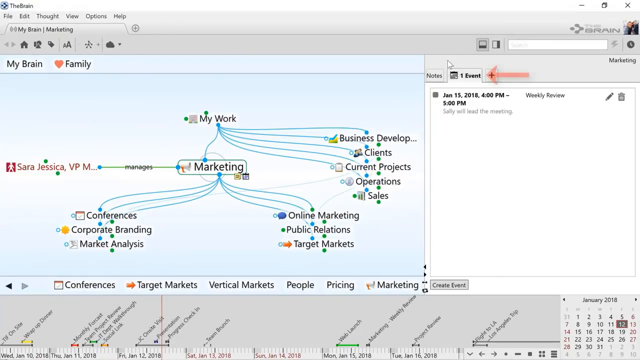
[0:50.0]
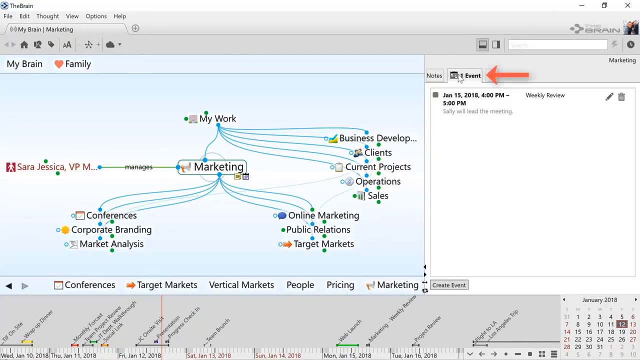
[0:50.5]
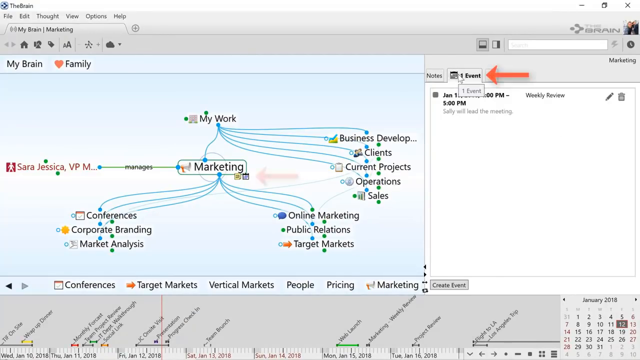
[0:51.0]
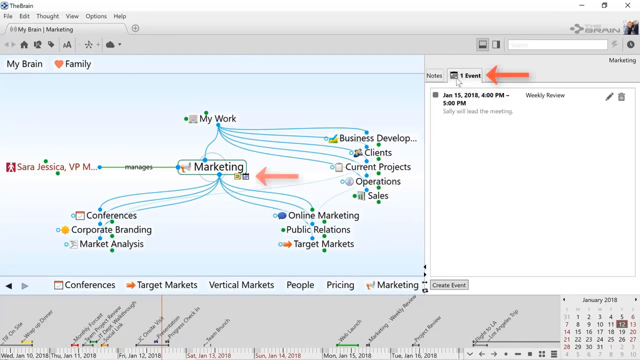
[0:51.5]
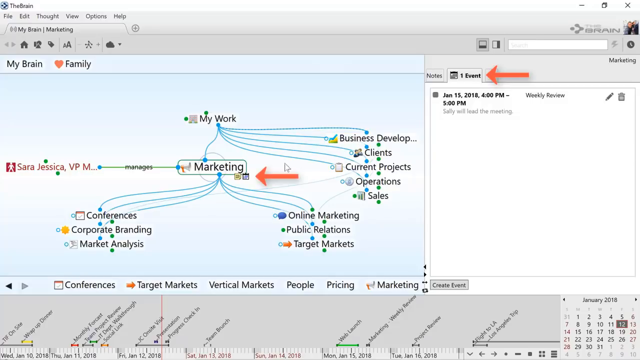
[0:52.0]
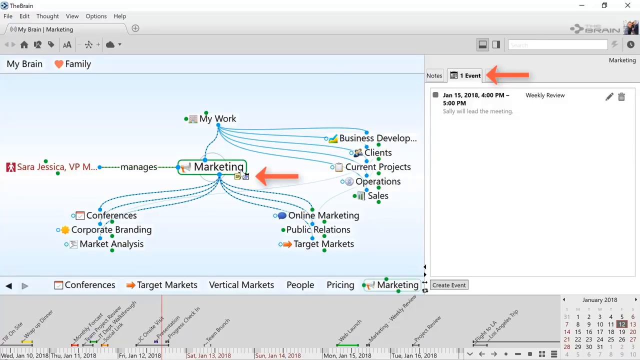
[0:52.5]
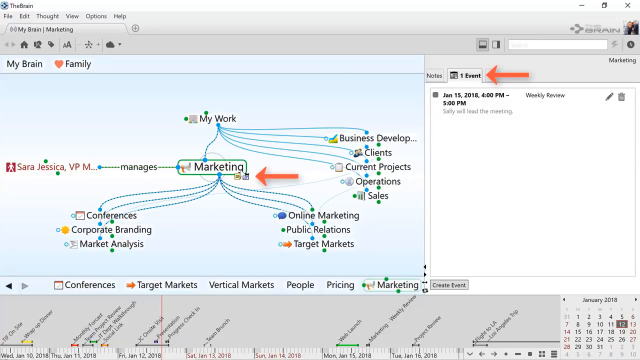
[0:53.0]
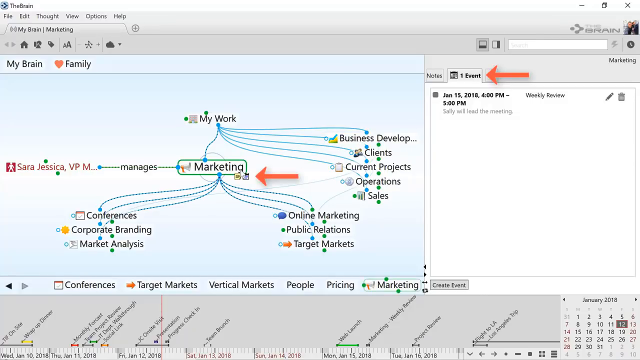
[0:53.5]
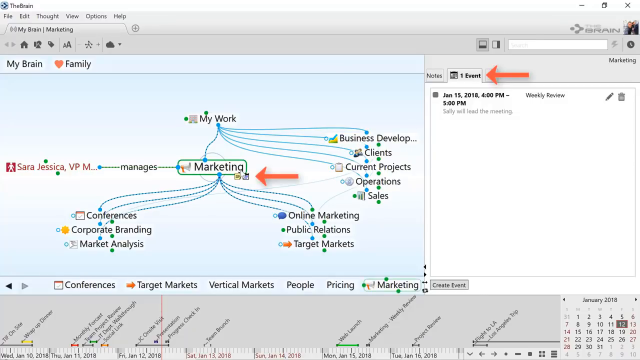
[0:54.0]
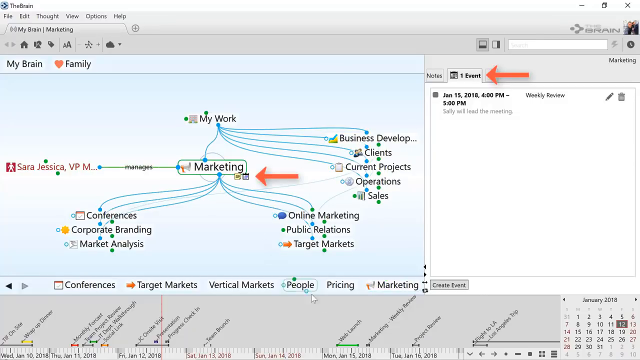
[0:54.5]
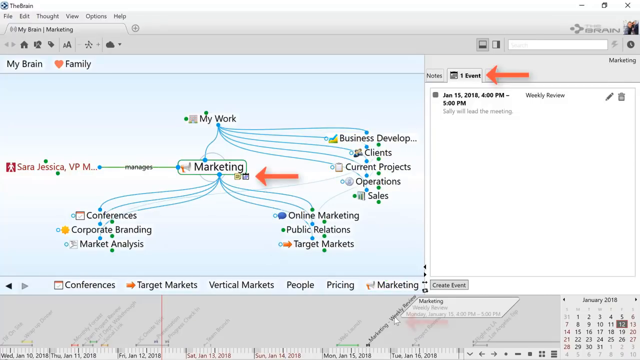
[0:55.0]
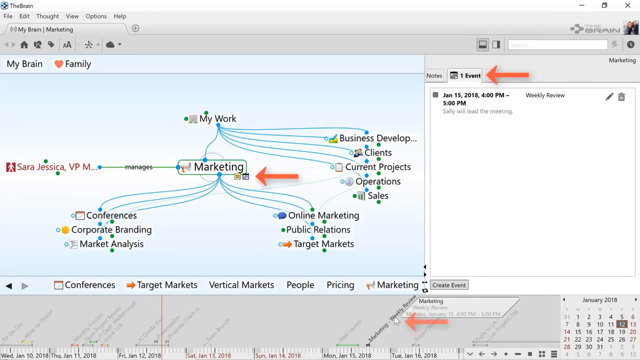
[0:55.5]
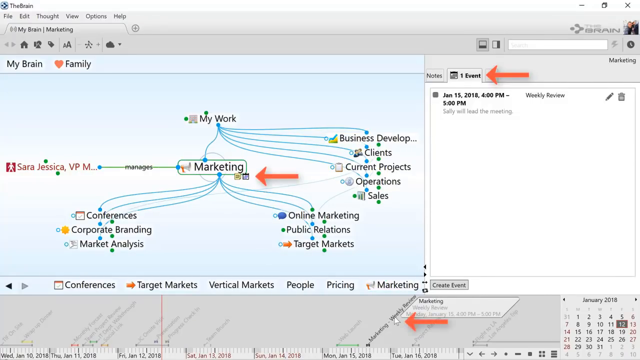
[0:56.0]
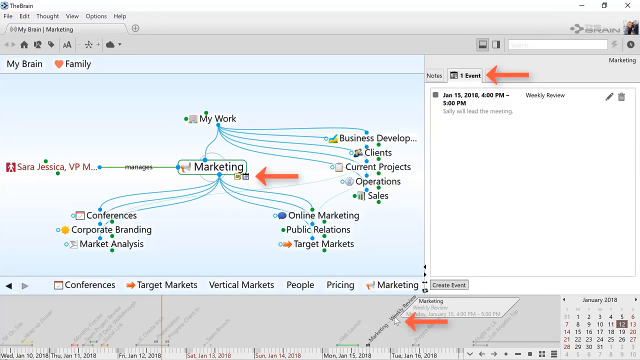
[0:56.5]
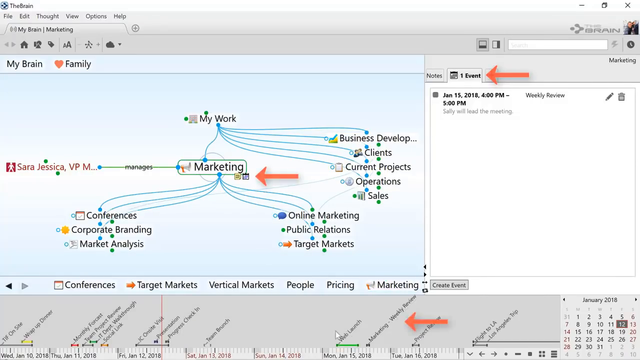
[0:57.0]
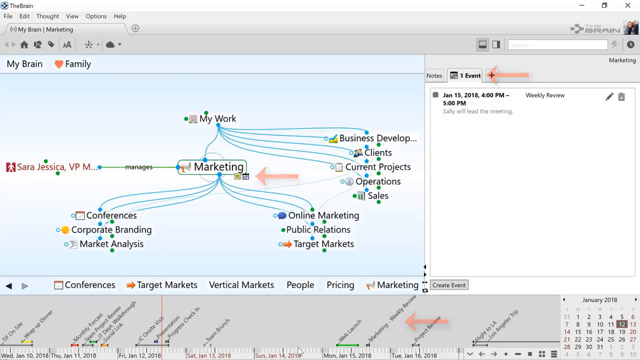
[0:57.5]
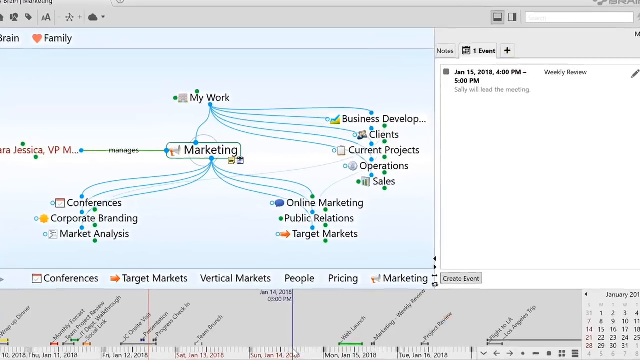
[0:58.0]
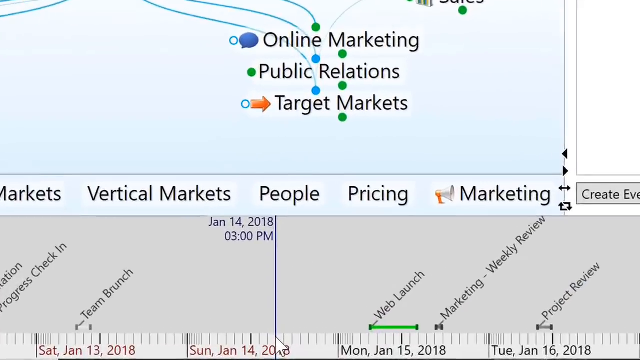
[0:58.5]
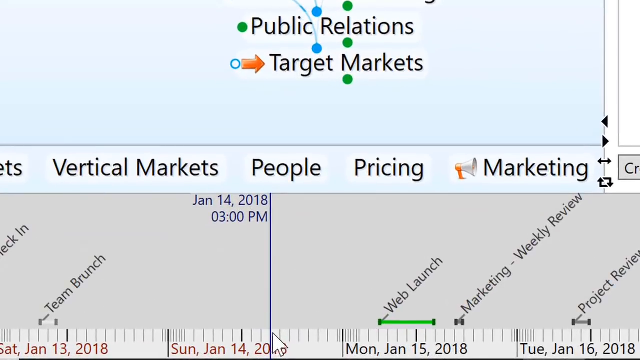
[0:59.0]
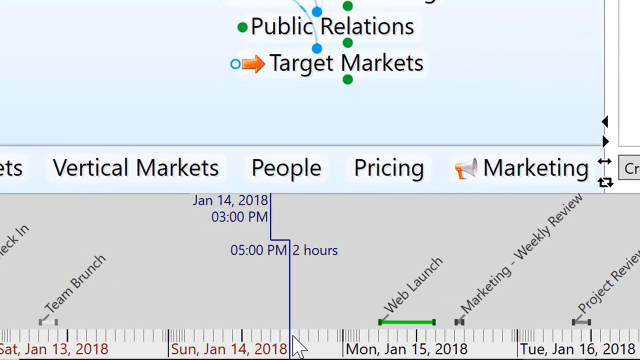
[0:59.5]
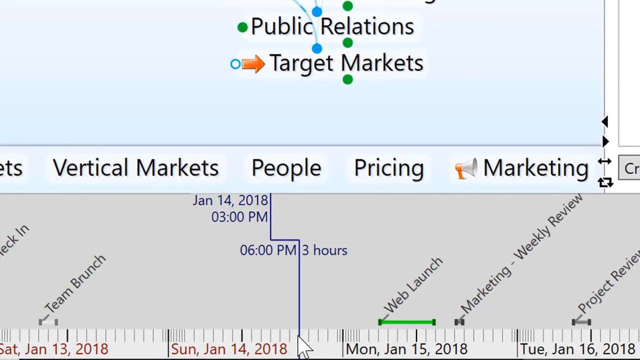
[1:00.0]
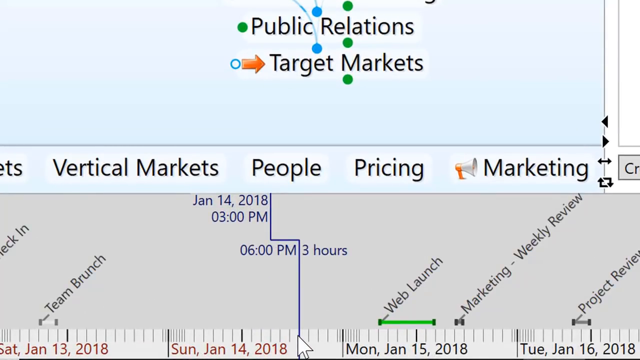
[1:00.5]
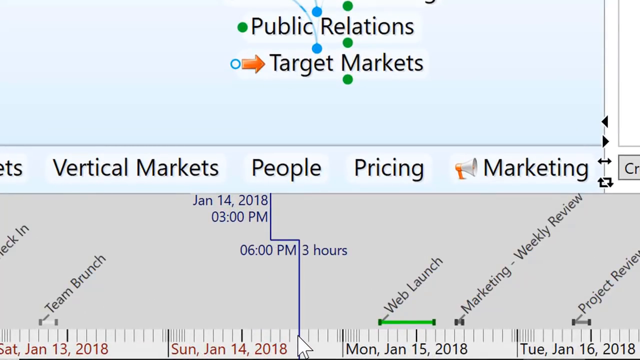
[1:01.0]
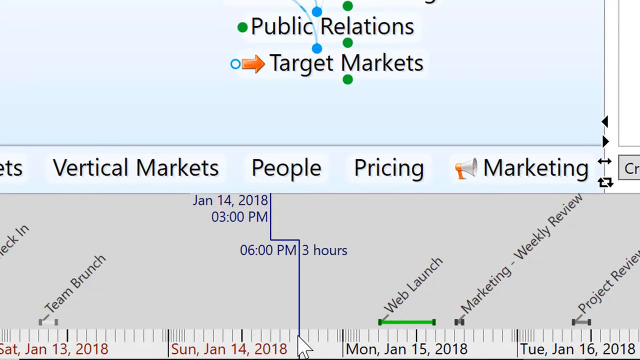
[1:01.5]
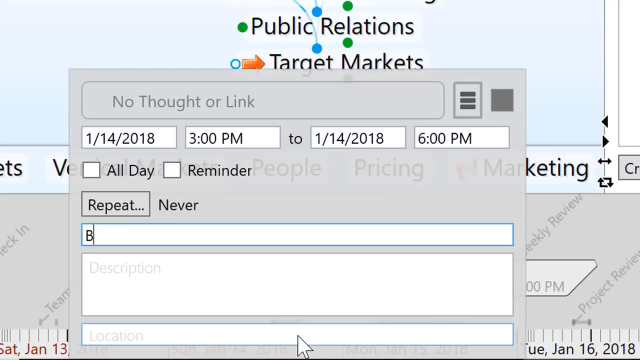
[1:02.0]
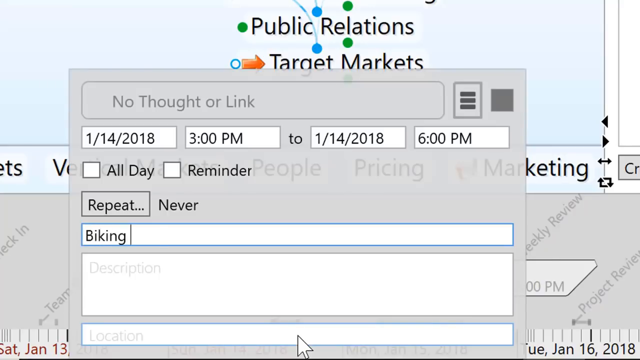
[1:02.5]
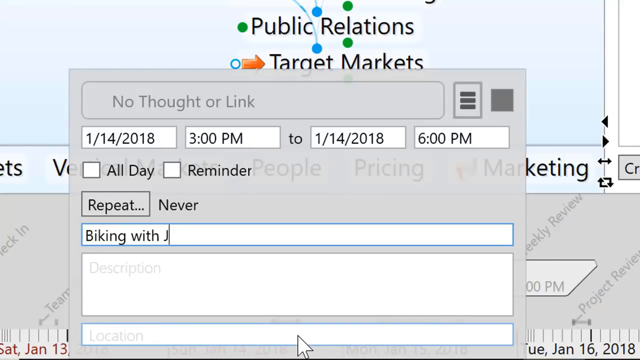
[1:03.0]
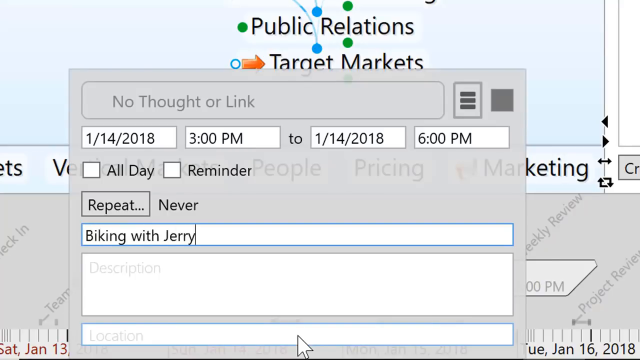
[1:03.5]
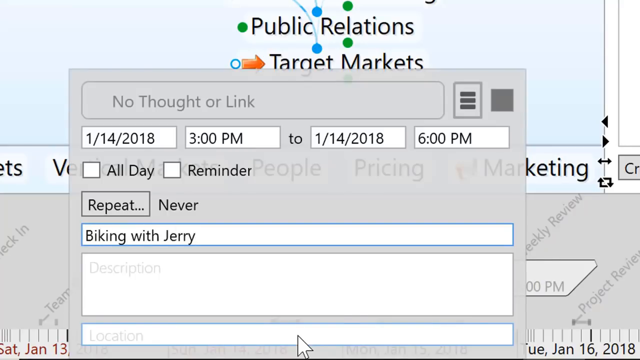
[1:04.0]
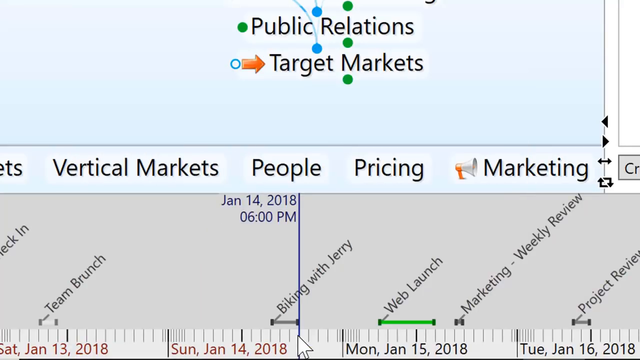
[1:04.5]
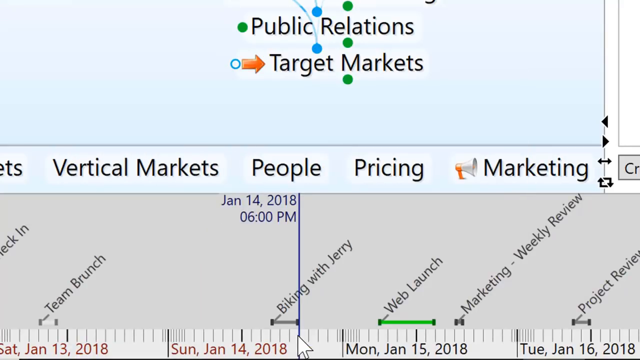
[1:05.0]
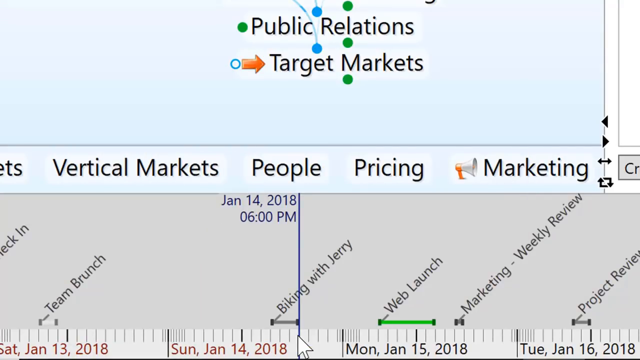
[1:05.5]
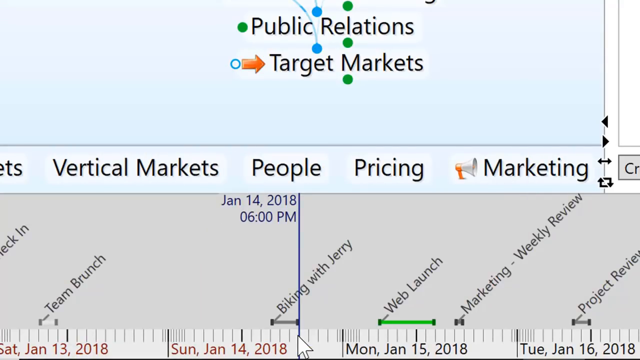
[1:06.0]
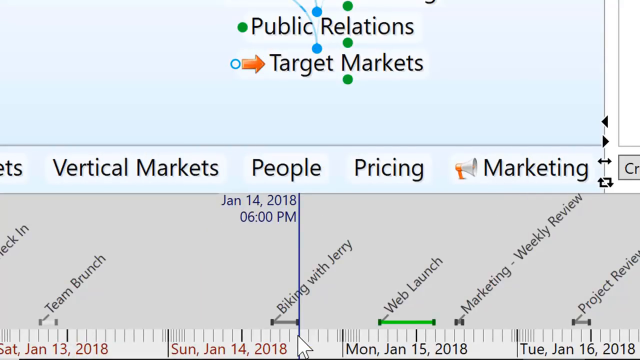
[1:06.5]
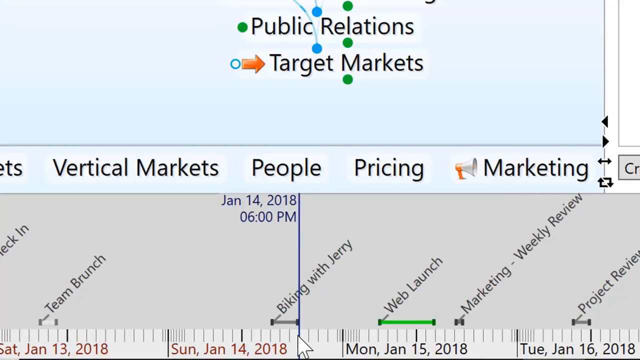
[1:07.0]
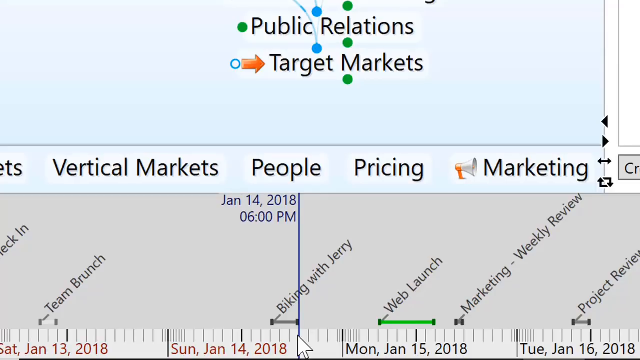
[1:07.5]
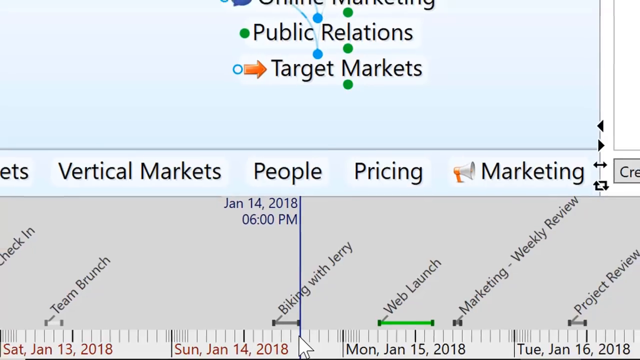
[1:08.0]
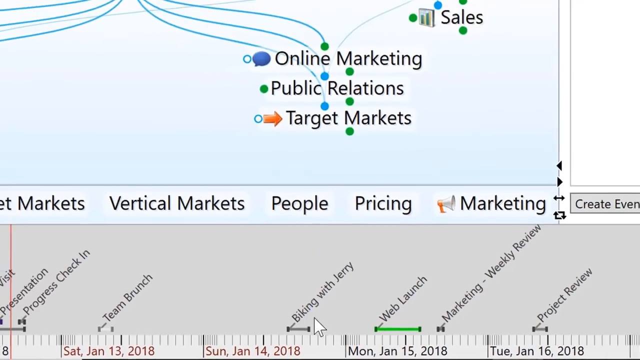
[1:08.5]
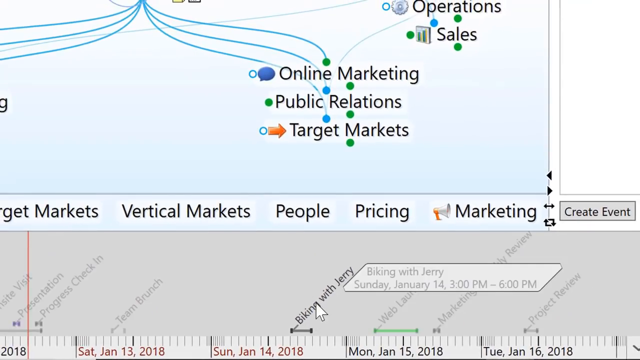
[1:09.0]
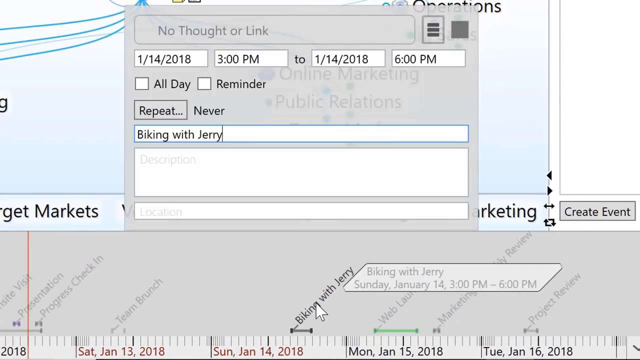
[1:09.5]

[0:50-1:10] The application's main screen appears, with an arrow highlighting marketing and the newly created event, and another arrow down on the timeline. The event shows up as a calendar item on the marketing relationship screen and also on the user's timeline. The view zooms in on the event on the timeline, and its duration is changed by moving part of the event's line. Then a new event is entered for 1-14-2018, 3pm to 1-14-2018, 6pm: "biking with Jerry."